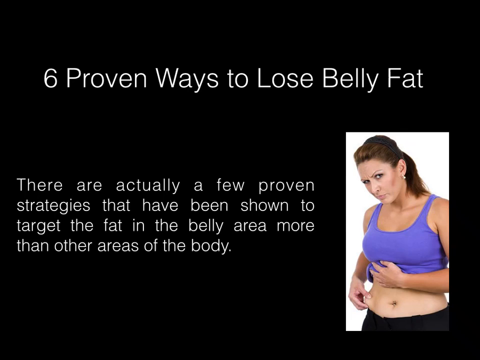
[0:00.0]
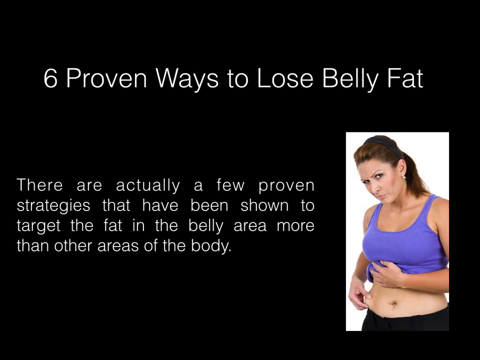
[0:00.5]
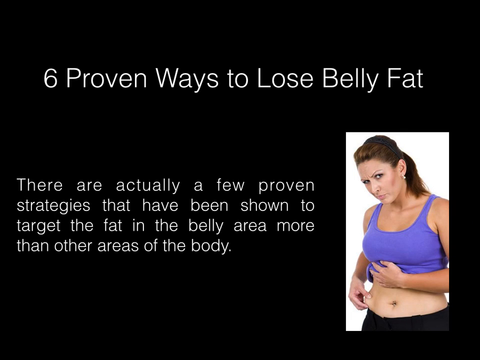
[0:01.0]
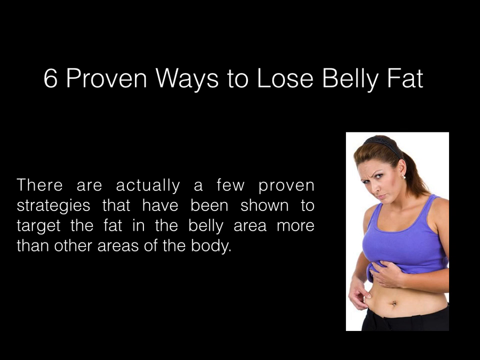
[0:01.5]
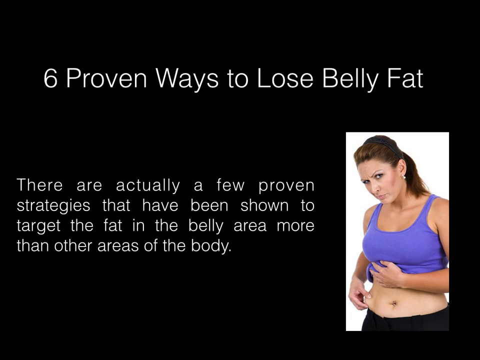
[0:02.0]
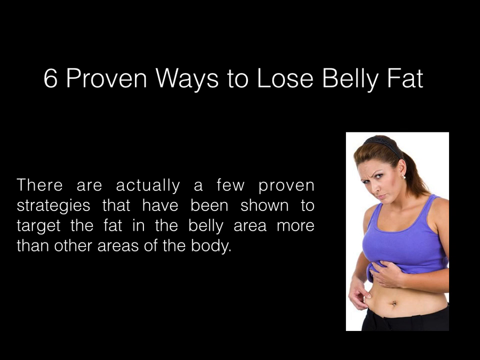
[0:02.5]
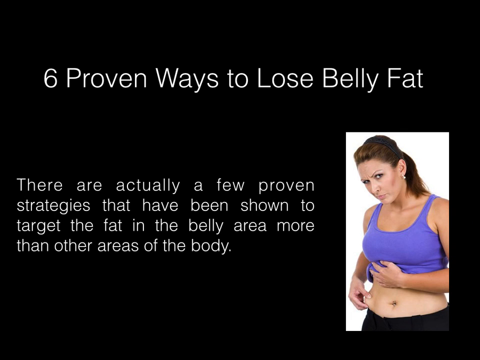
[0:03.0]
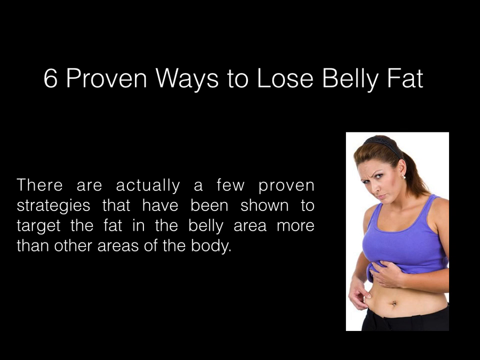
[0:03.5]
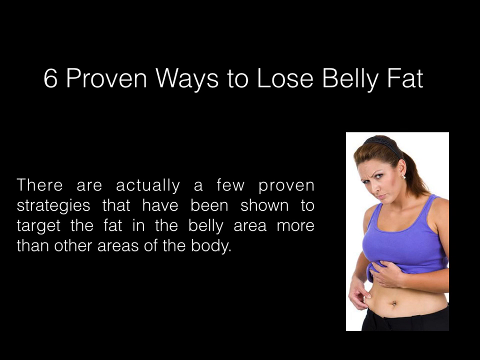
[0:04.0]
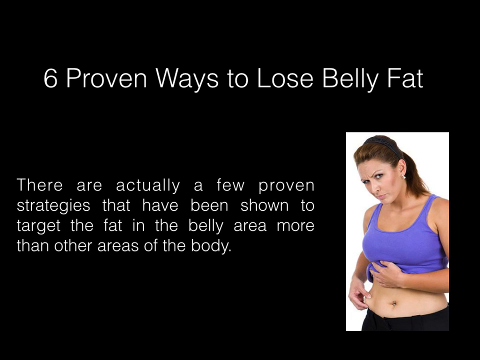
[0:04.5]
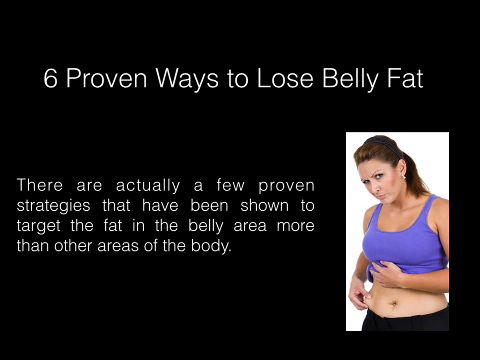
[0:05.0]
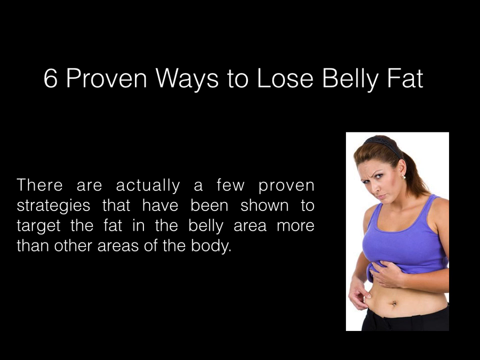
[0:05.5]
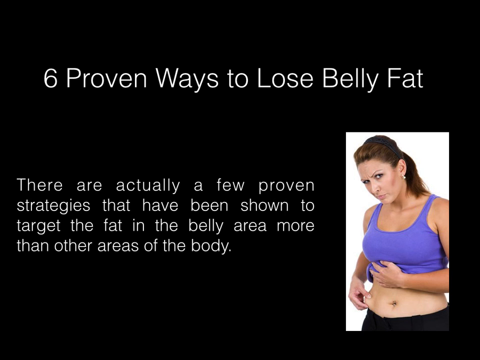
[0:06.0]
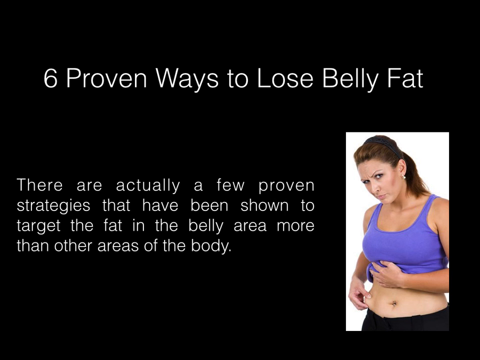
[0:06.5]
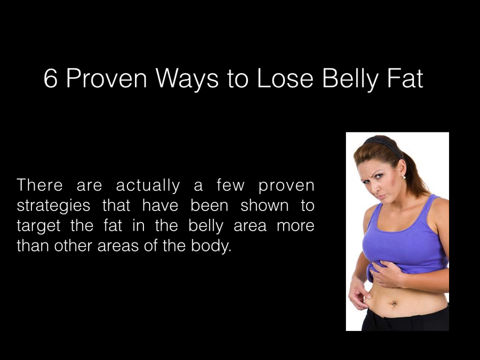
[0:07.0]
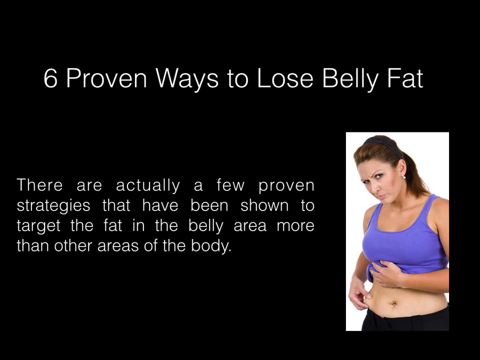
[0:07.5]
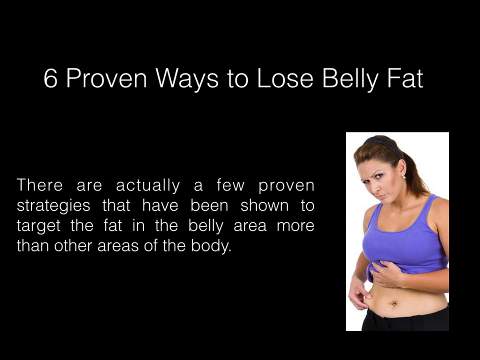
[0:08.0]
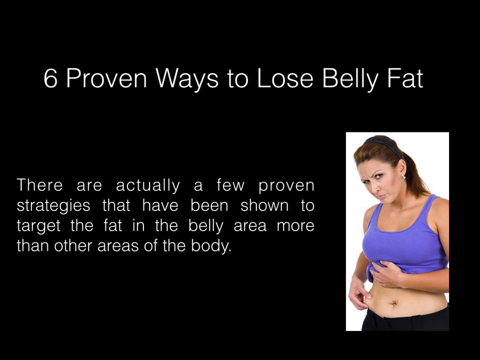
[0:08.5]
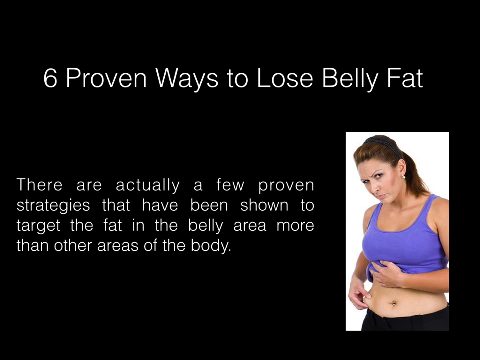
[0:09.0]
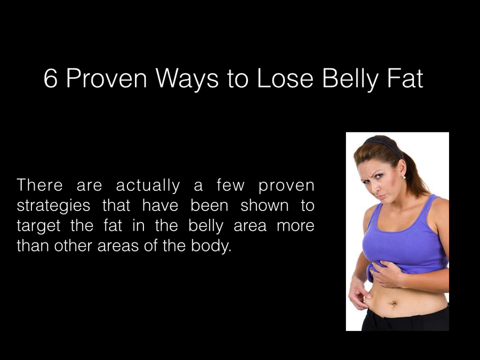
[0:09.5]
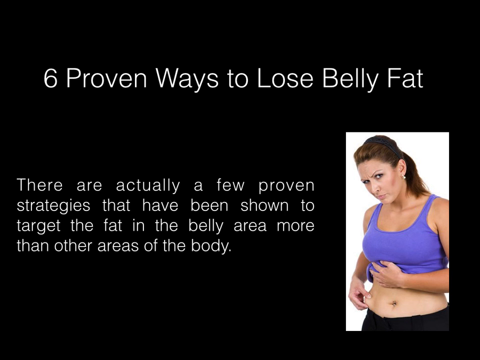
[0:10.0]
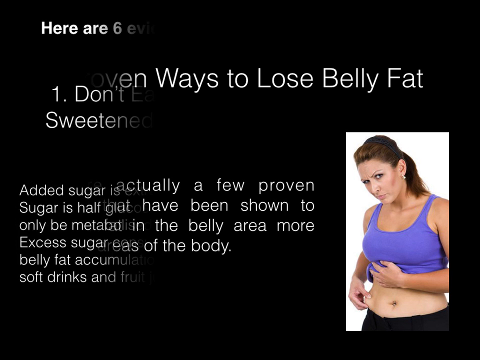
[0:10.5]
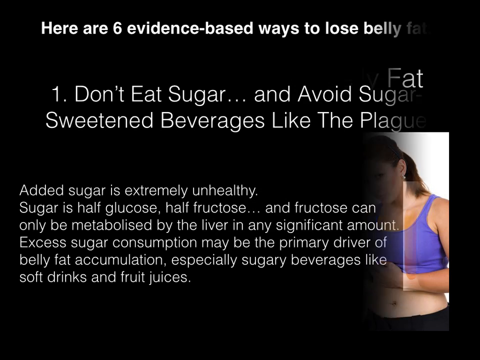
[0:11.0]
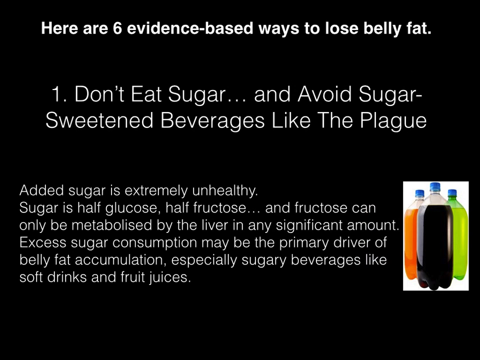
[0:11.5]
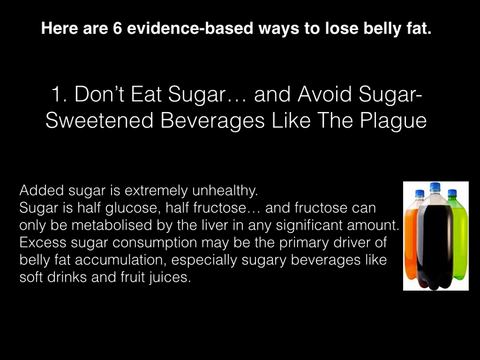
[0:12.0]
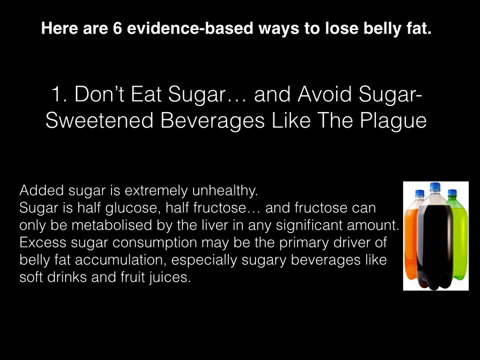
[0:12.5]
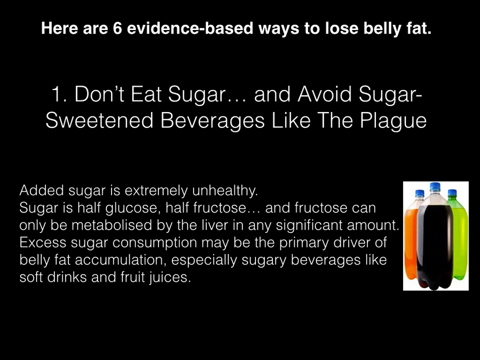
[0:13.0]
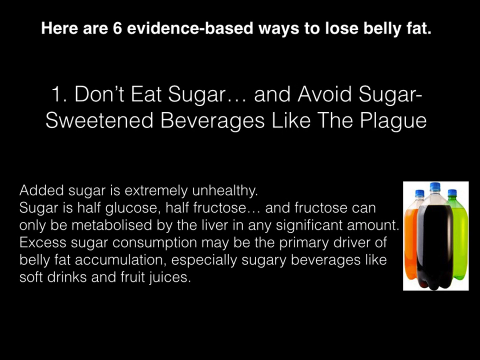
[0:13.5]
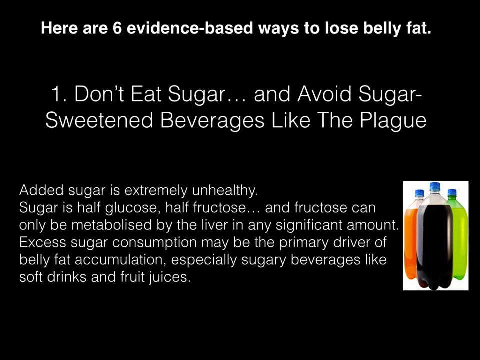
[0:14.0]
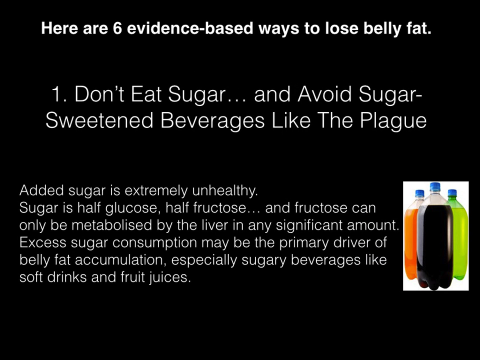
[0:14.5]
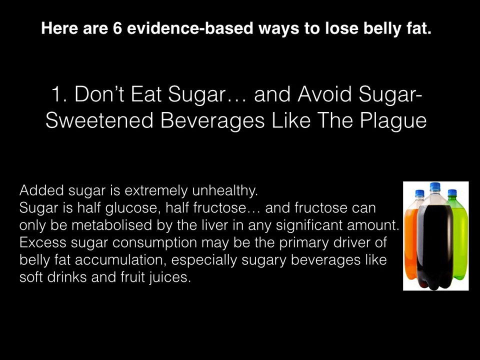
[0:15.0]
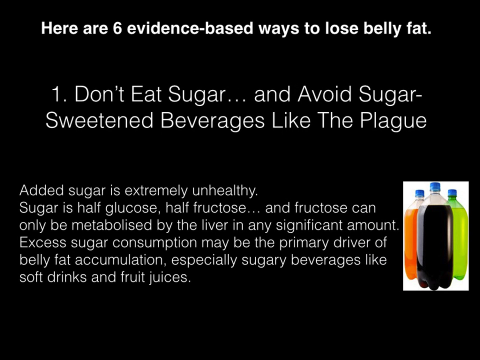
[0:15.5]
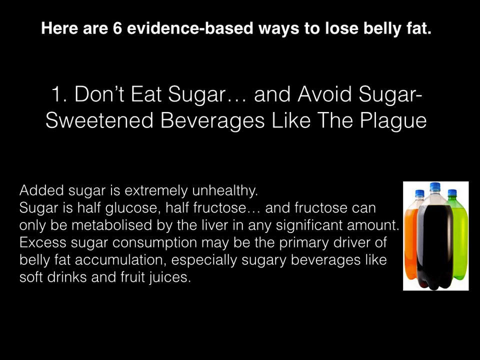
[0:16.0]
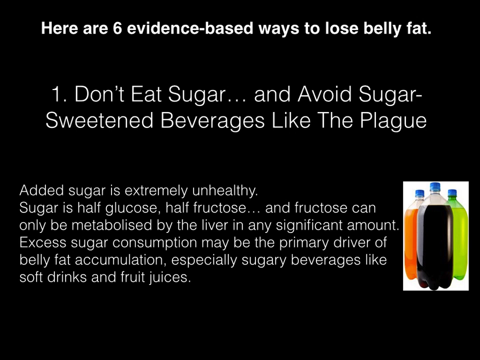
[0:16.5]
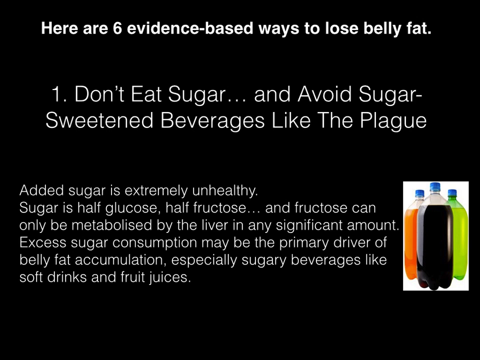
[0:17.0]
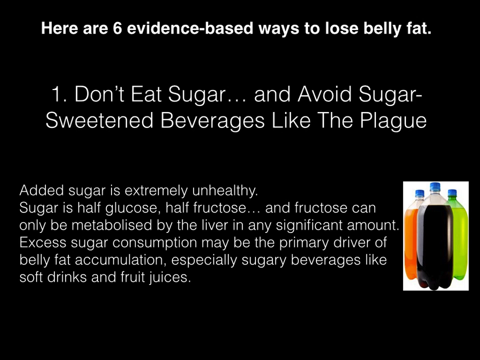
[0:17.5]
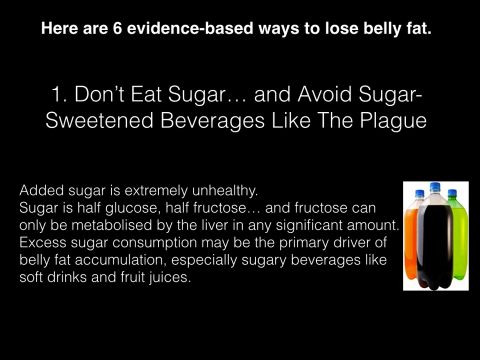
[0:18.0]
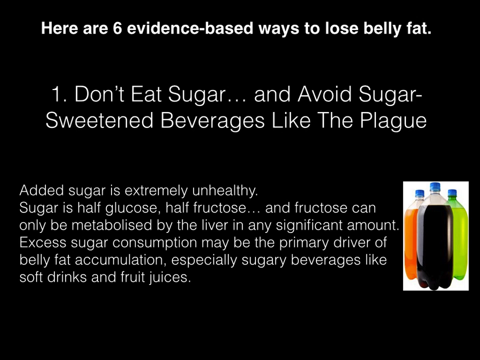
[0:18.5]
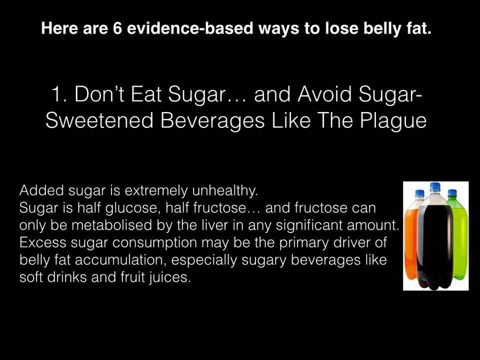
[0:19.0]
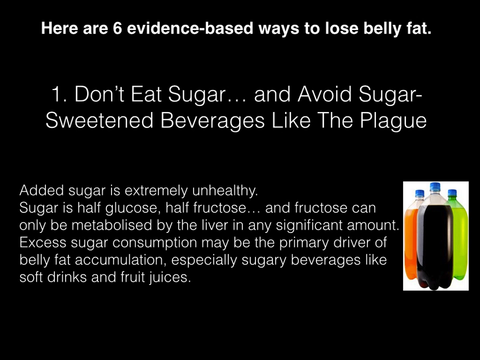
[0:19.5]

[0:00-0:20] This exercise video opens with a slide on a black background that reads "six proven ways to lose belly fat" at the top. An image on the right shows a woman with brown hair wearing a purple tank top, which she has lifted to expose her belly and its fat; she pinches it with the fingers of her right hand. On the left side of the screen the text reads "there are actually a few proven strategies that have been shown to target the fat in the belly area more than other areas of the body." The next slide reads "here are six evidence-based ways to lose belly fat," and below that "number one don't eat sugar and avoid sugar sweetened beverages like the plague." Further below it reads "added sugar is extremely unhealthy sugar is half glucose half fructose and fructose can only be metabolized by the liver in any significant amount excess sugar consumption may be the primary driver of belly fat accumulation especially sugary beverages like soft drinks and fruit juices." A picture of three soda bottles, one orange, one black and one green, is on the right.